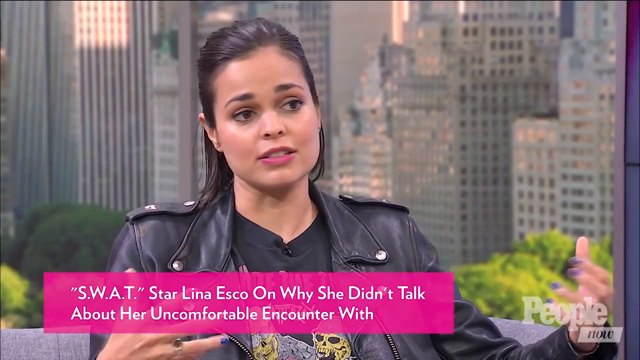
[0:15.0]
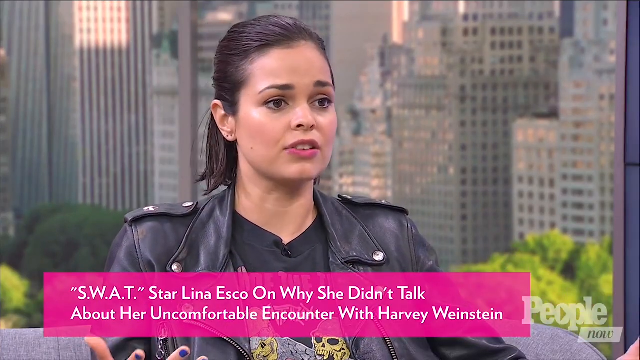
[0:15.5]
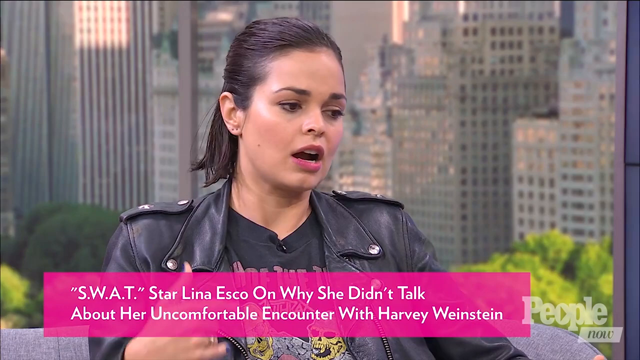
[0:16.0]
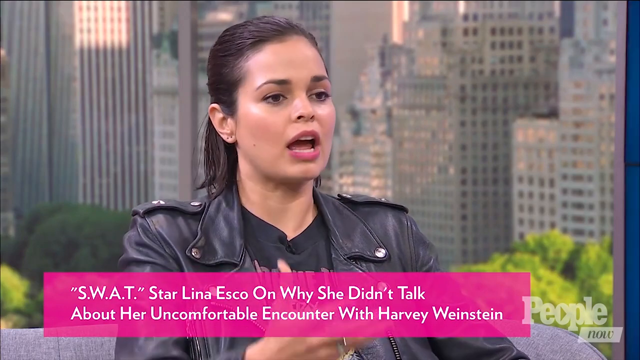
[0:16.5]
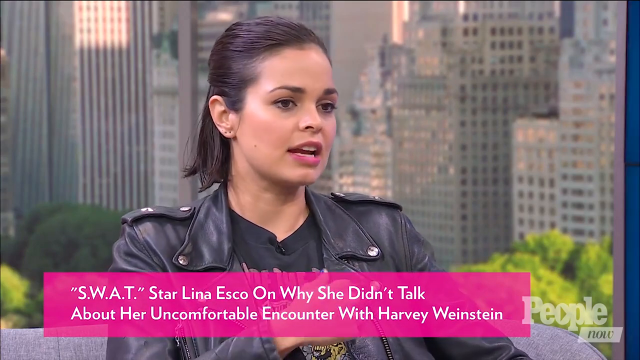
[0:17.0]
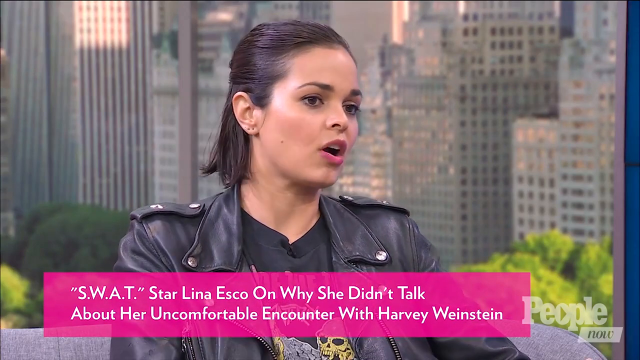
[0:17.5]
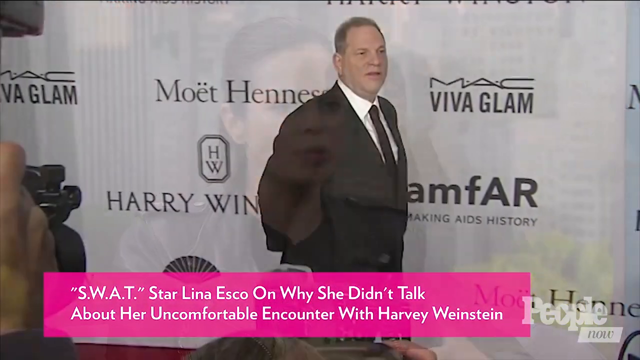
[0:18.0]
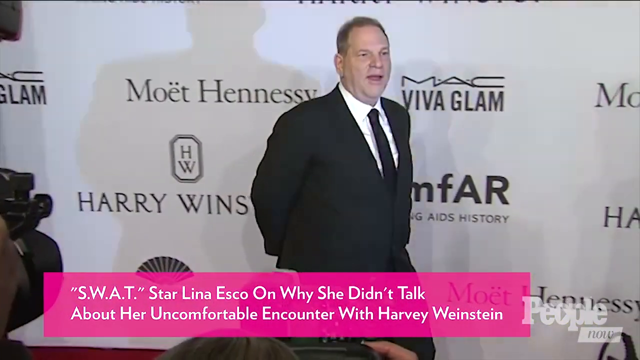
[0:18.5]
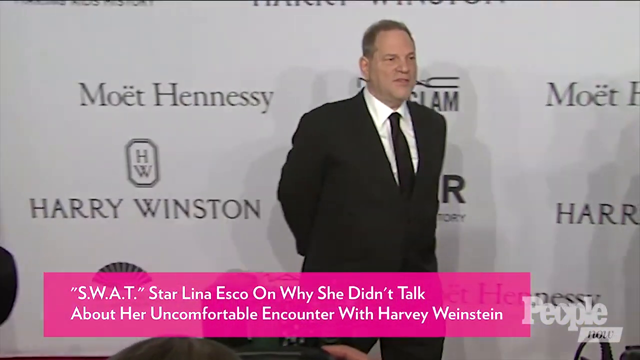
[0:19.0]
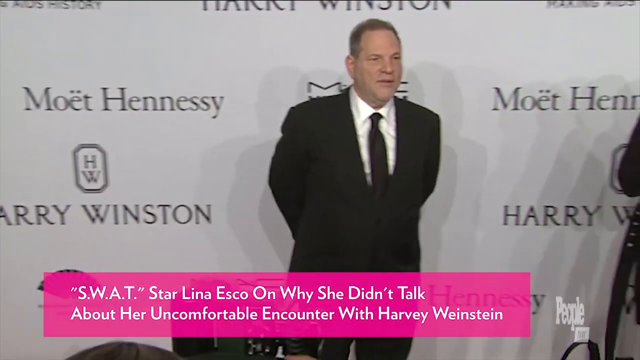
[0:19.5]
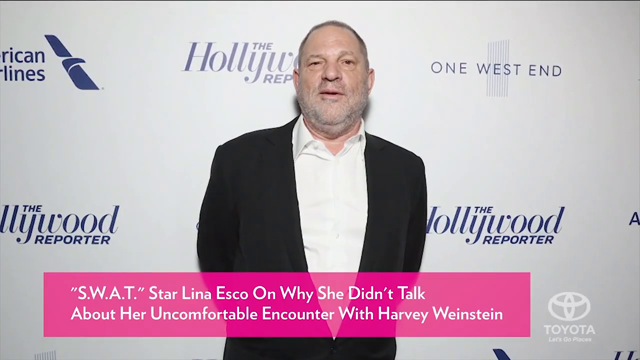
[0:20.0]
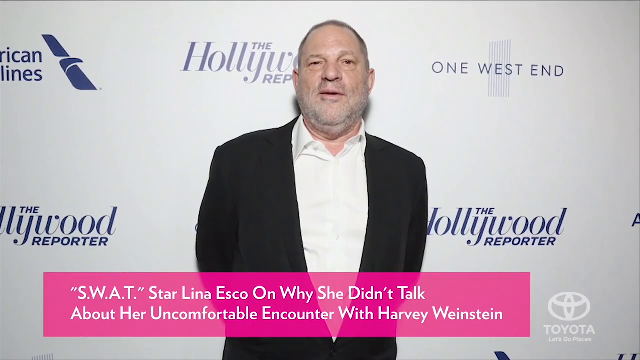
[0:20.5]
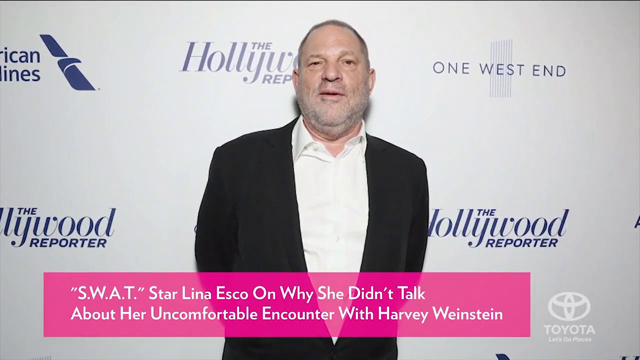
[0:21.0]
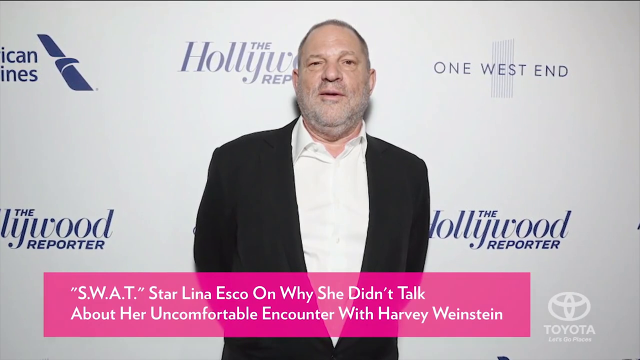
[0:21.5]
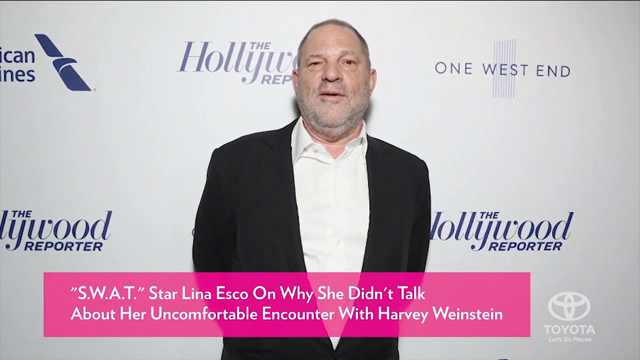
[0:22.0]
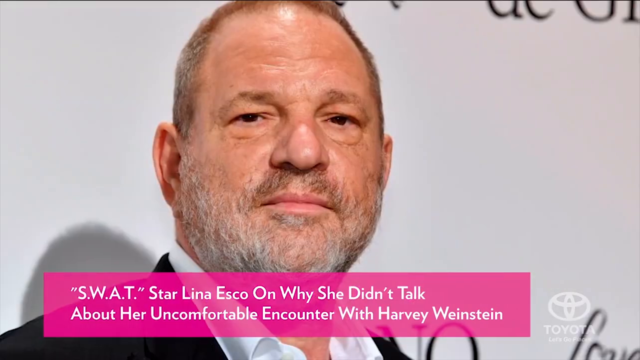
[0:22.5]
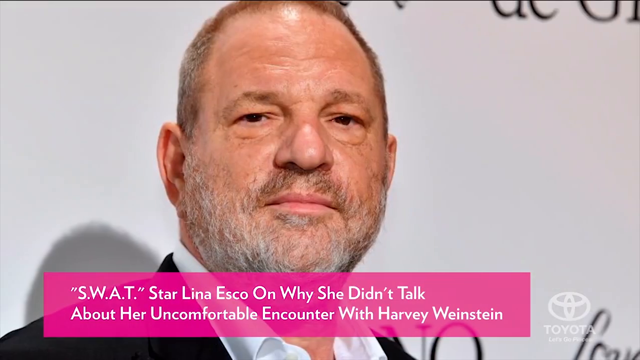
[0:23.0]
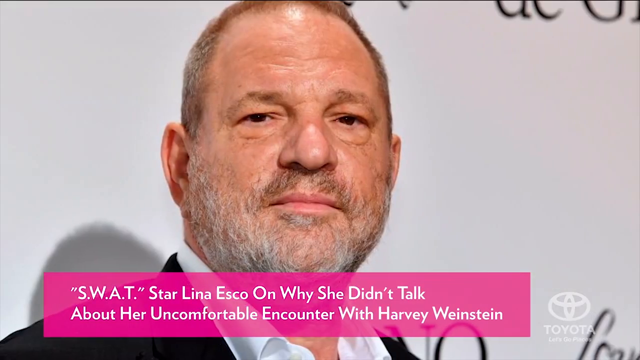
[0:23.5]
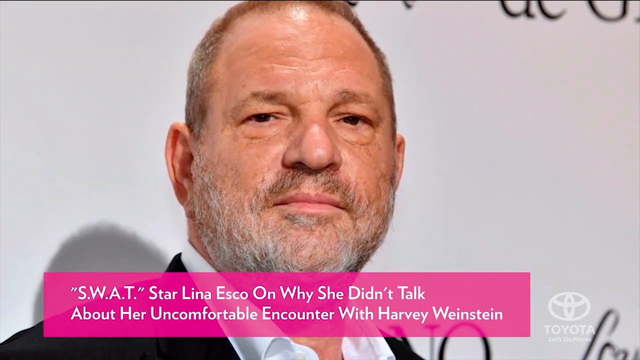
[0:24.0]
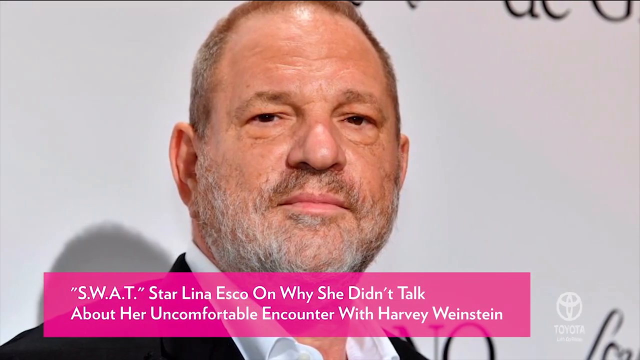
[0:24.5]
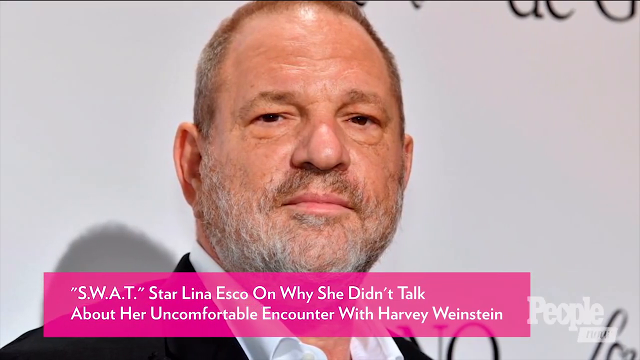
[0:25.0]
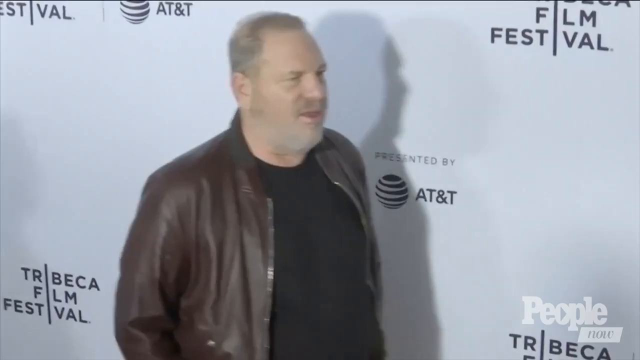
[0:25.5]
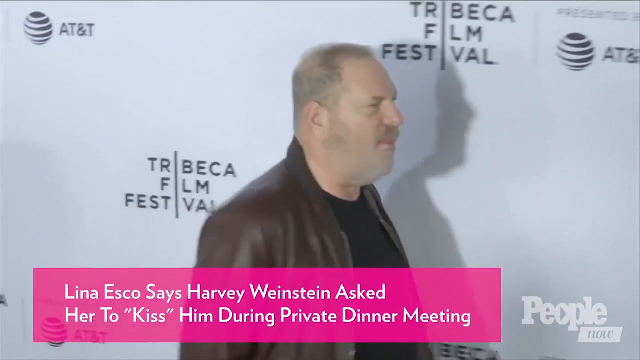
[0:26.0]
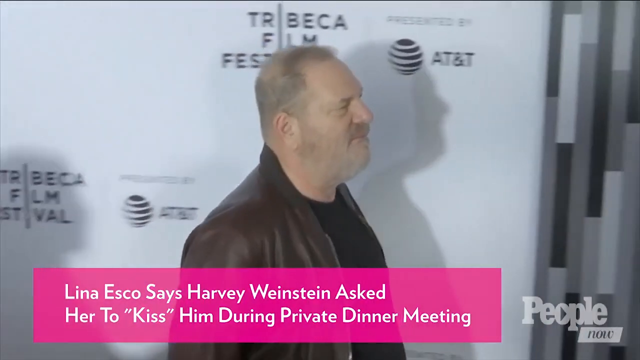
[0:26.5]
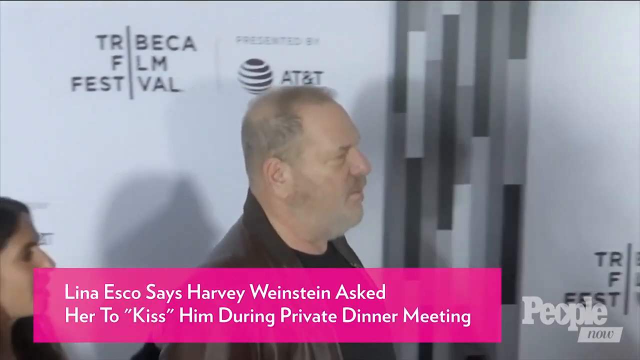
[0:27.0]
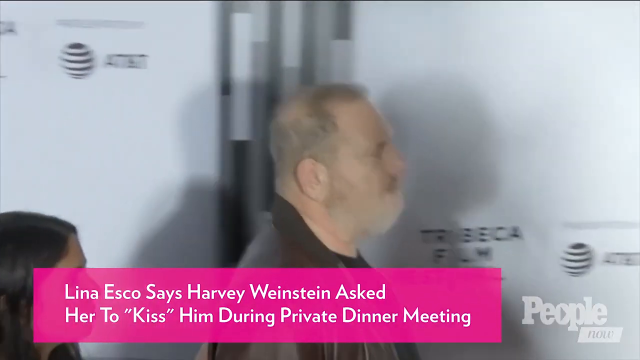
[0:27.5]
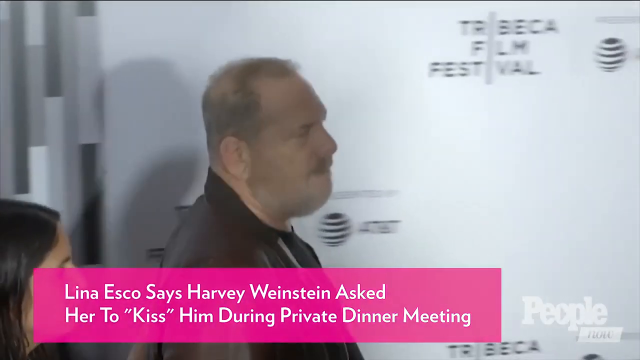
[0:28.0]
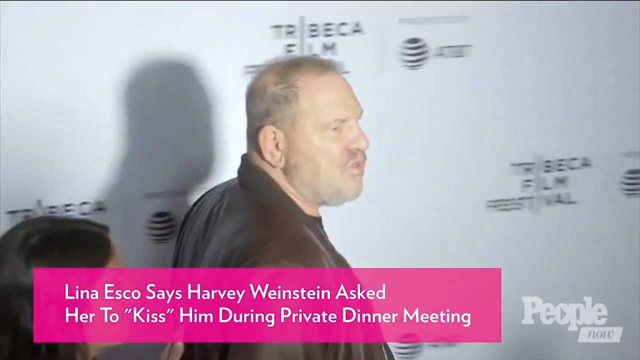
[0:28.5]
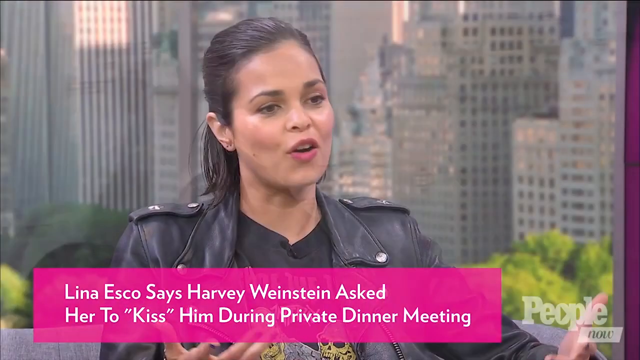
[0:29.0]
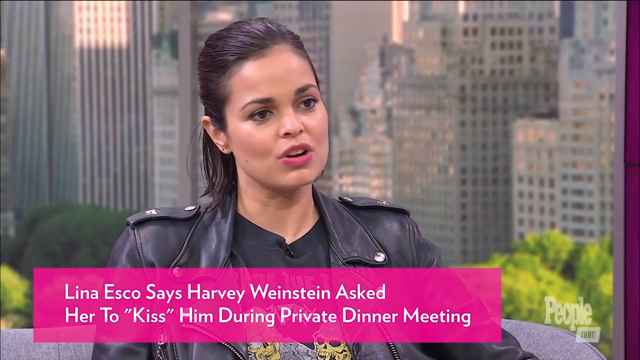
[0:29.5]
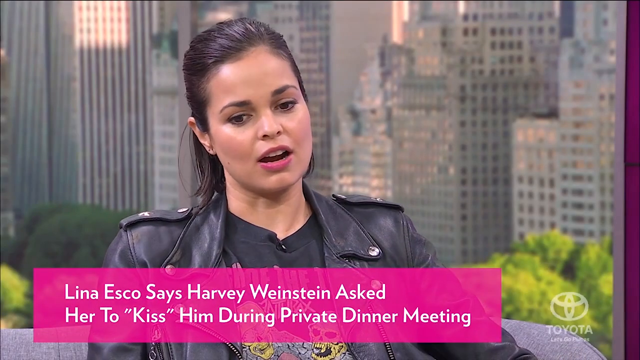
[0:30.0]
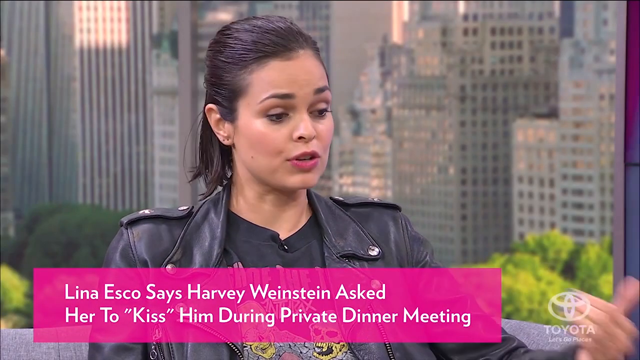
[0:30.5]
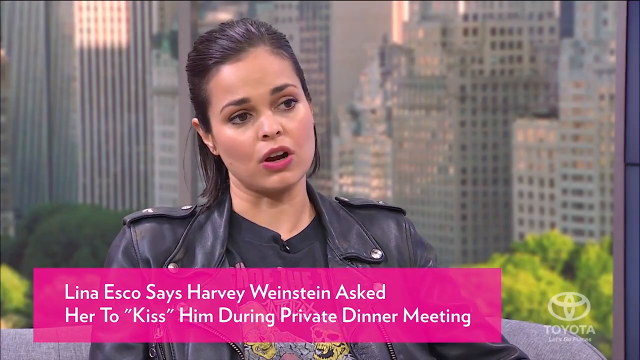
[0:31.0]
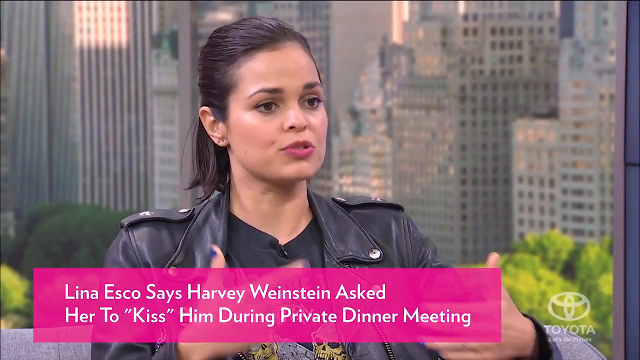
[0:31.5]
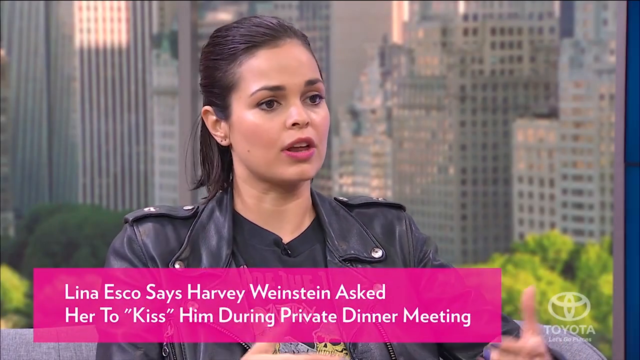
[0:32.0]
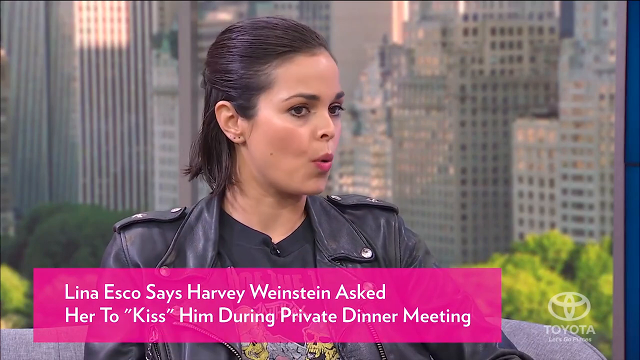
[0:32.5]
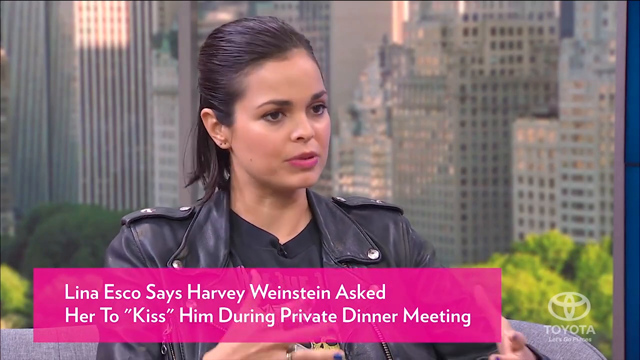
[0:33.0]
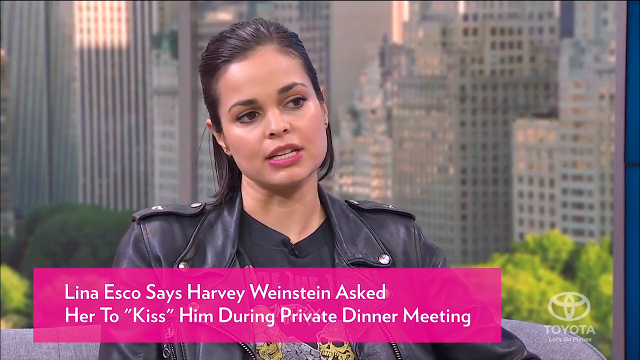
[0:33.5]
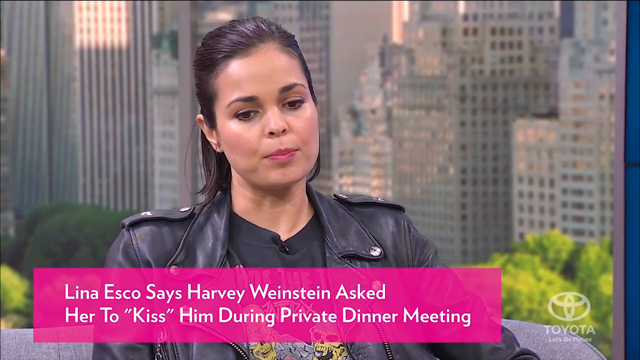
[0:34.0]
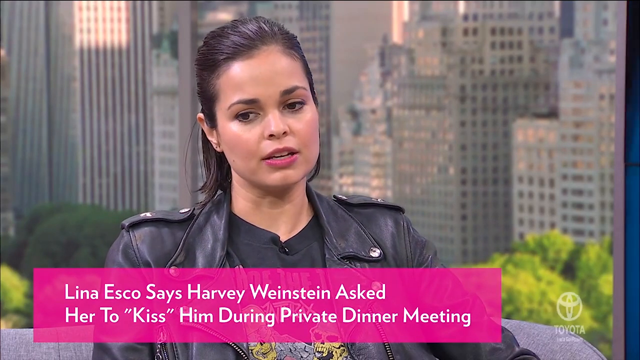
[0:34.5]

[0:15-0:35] The actress continues talking, and then the video shows a man at an event in front of a backdrop printed with a company's sponsorship logos. He wears a black jacket and a white shirt, is elderly, looks to be in his 60s, and is possibly also an actor; his head is covered with almost all gray hair. He walks, stops, and a few pictures are taken of him. One man wears a black jacket and another wears a brown leather jacket. On the backdrop behind the man standing, several names are visible, including "rebecca film", "Hennessy", and something like "hollywood reveal".